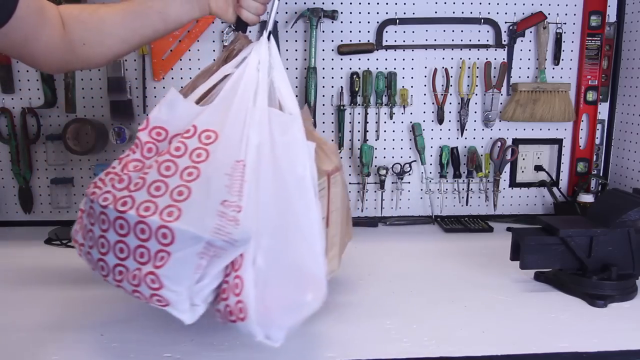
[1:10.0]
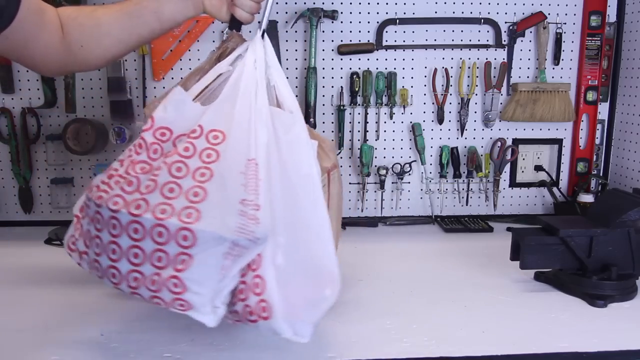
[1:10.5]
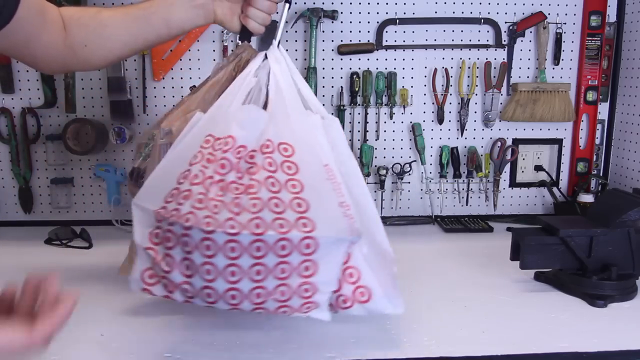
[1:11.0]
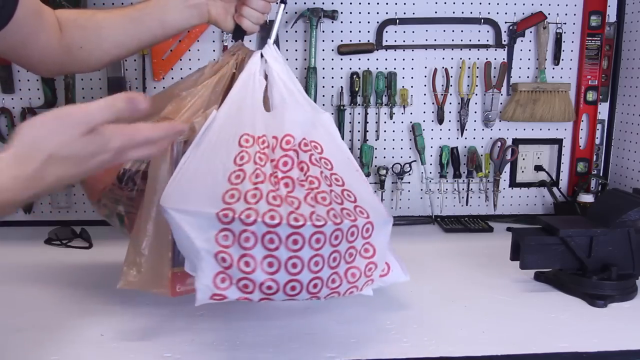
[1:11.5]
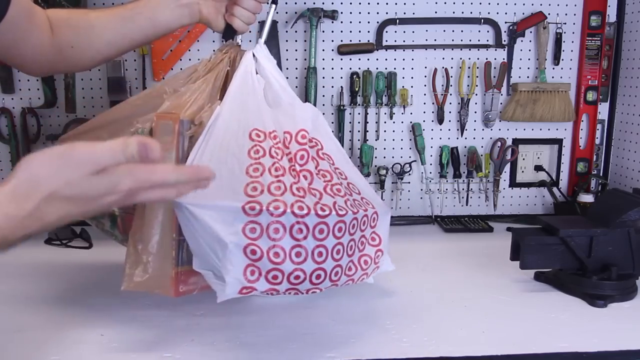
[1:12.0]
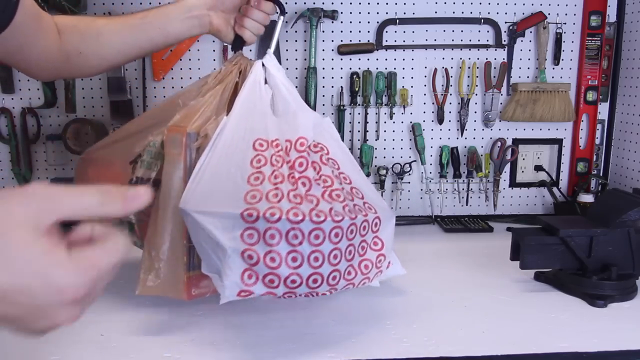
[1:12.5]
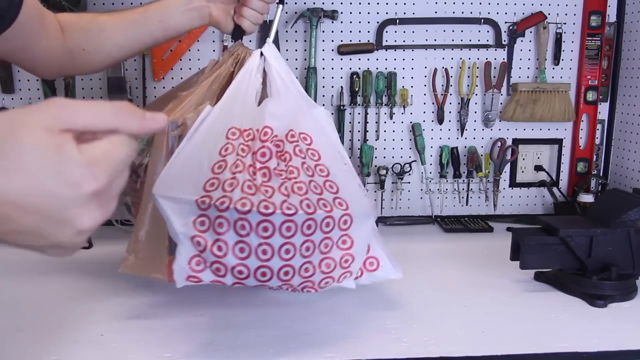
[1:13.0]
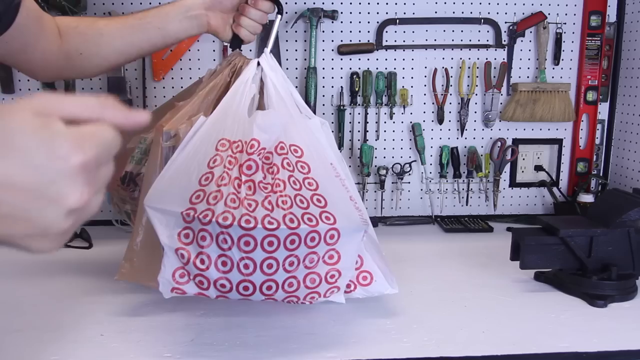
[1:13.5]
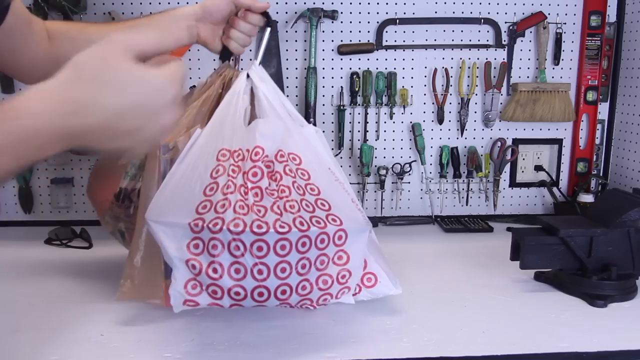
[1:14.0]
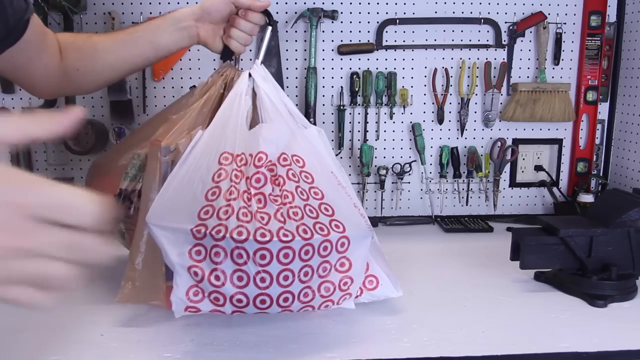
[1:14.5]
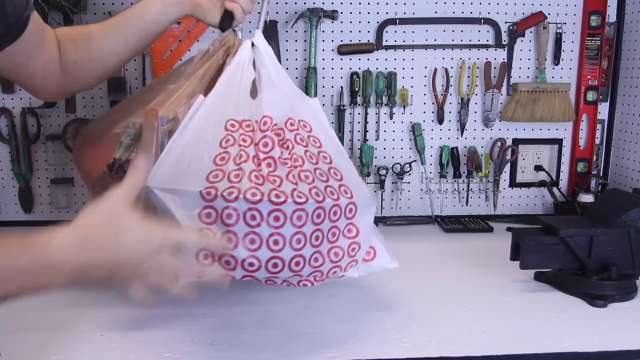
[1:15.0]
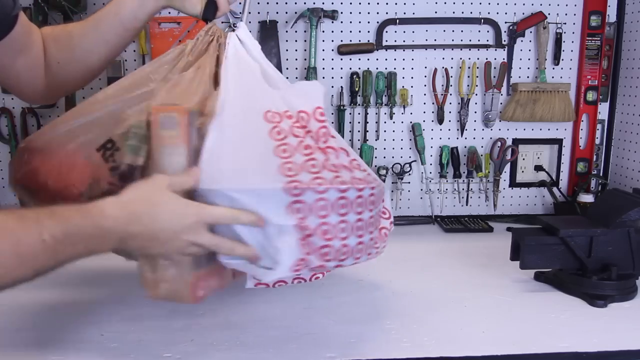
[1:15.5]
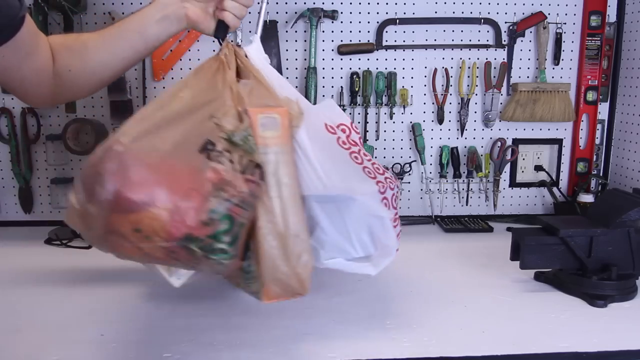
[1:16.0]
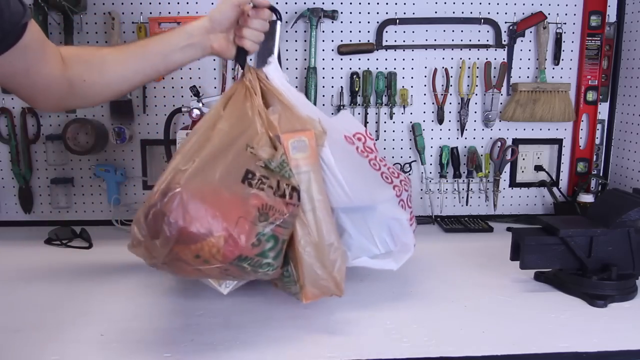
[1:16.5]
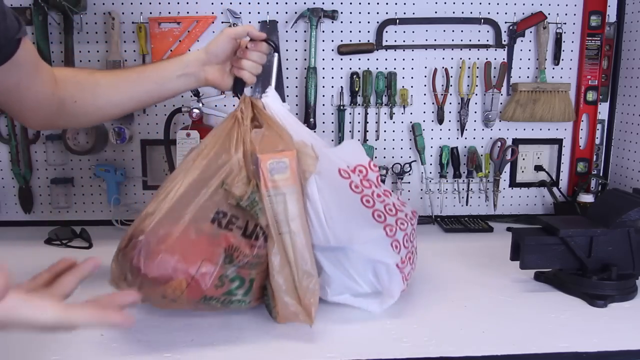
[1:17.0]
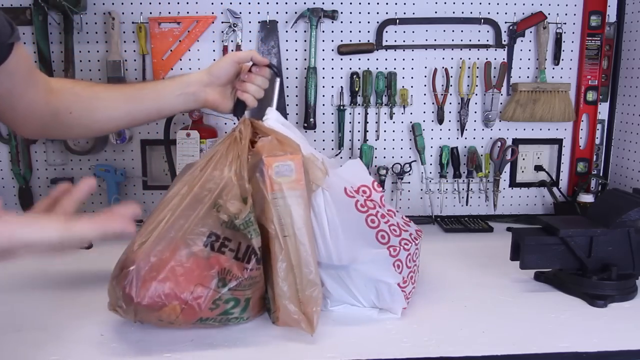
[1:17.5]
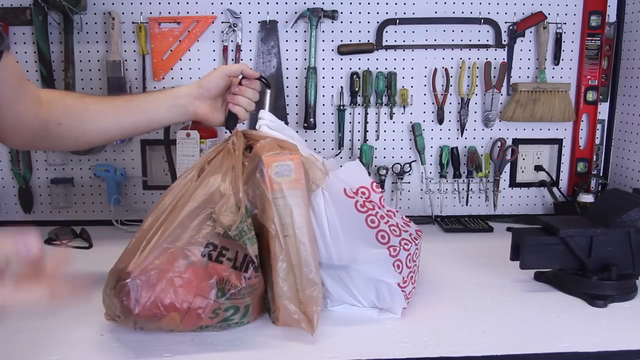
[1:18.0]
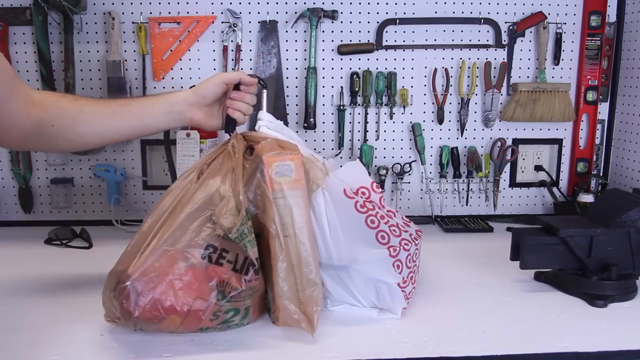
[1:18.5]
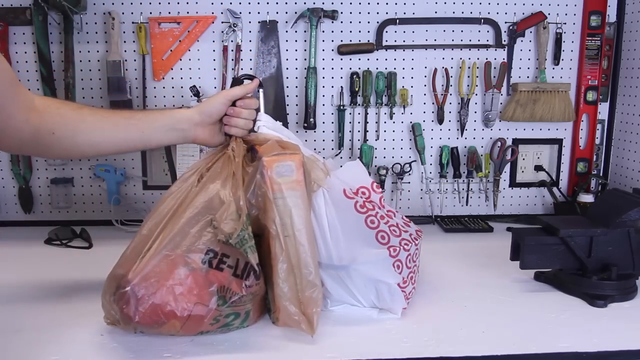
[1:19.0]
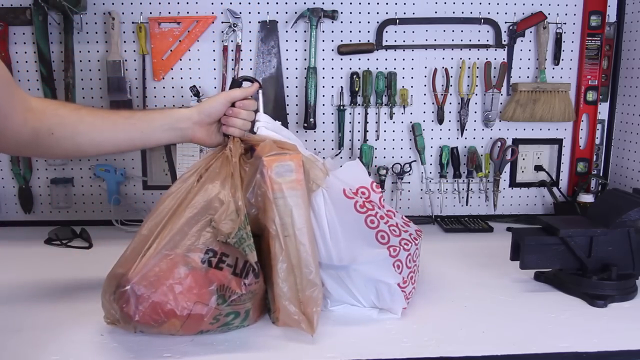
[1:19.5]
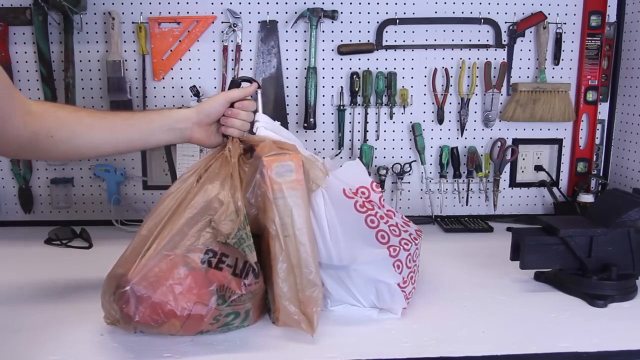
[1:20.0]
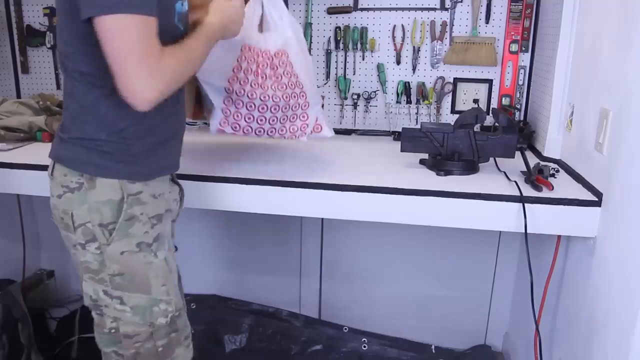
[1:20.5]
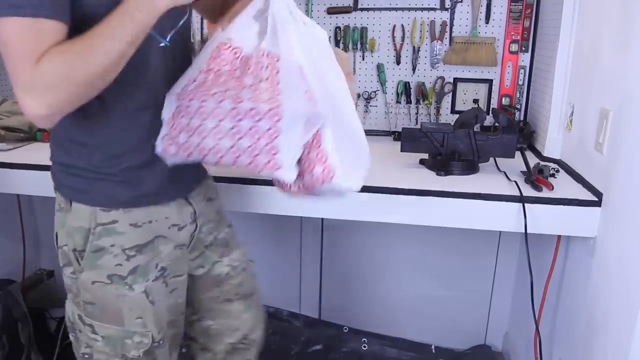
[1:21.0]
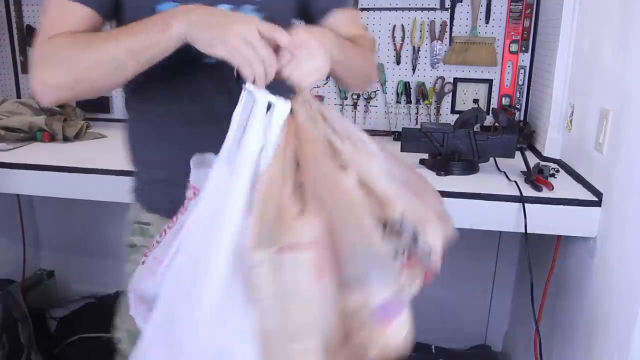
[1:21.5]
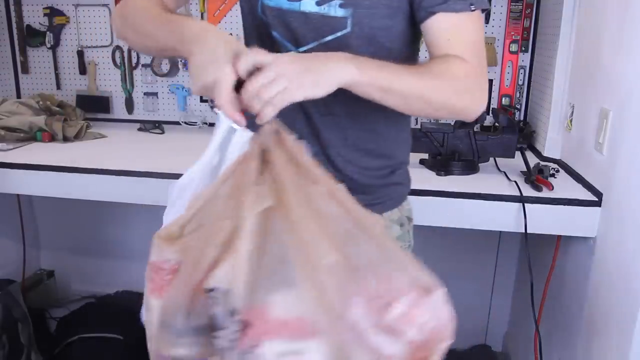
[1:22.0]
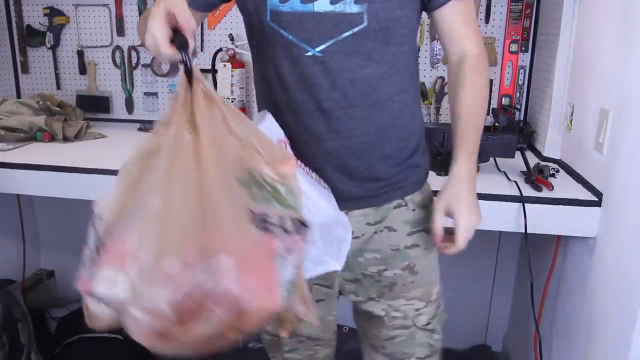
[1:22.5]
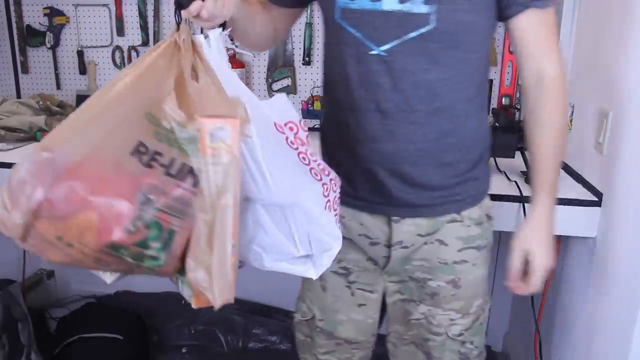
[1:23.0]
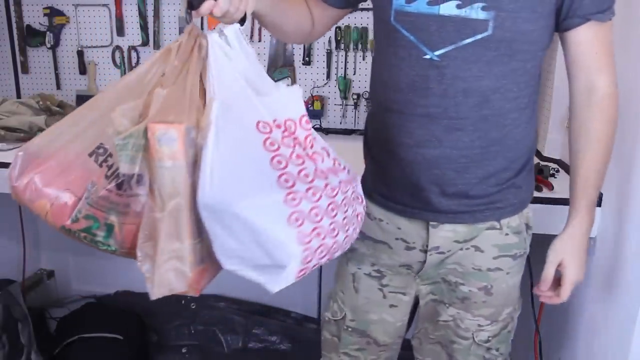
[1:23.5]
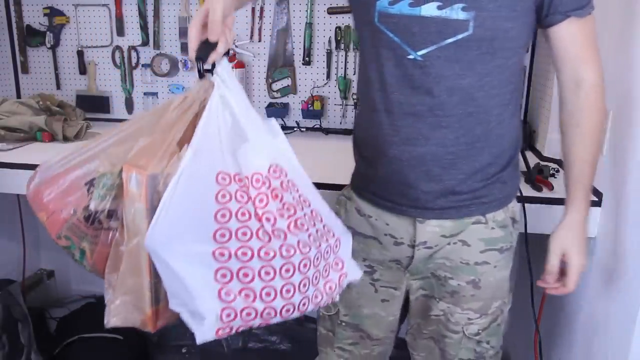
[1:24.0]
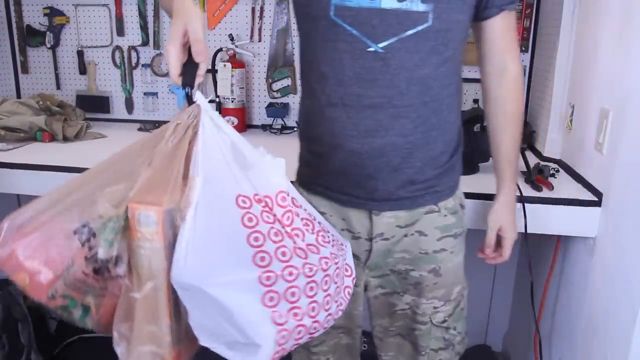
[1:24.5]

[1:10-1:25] The person has the bags suspended in the air and spins them. The shot then changes to show more of the shop as he brings the bags forward to show how the groceries would be carried. The floor of the workshop is now visible, along with the person's clothing: green camo pattern pants and a shirt with what looks like a wave or saw-like printed image. A power cable runs along the right side of the table to the outlet and to a black item on the table, and on the ground there appears to be a bag and several other items.